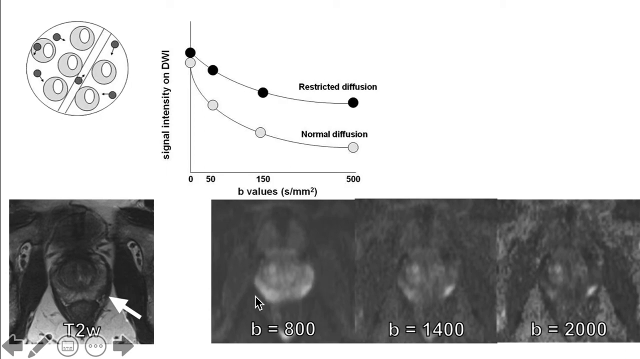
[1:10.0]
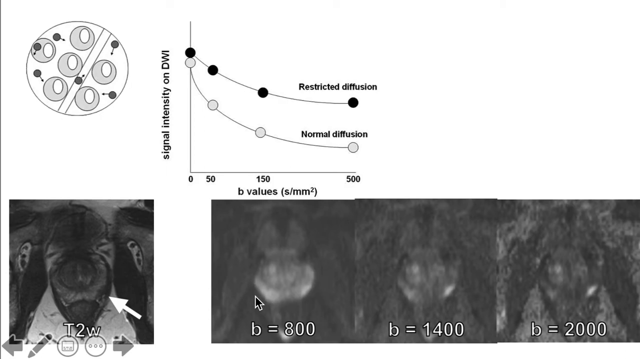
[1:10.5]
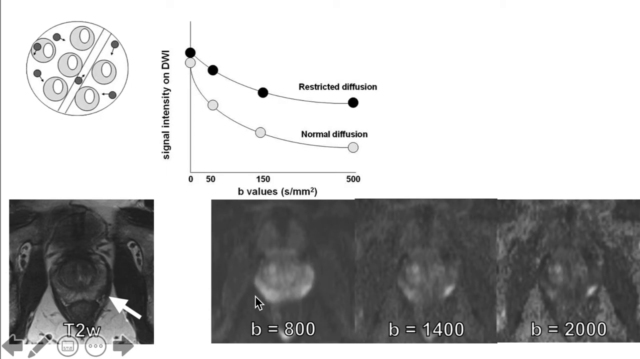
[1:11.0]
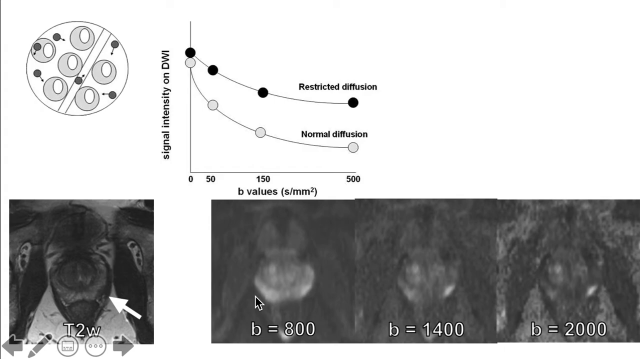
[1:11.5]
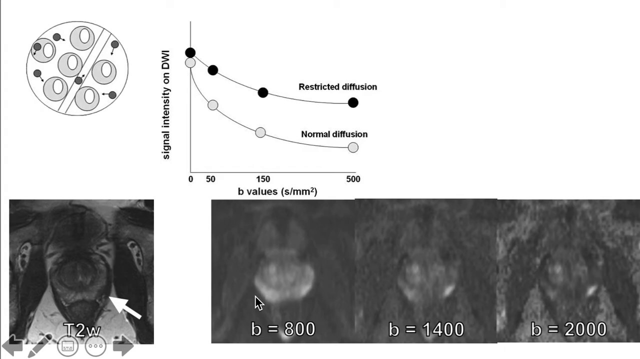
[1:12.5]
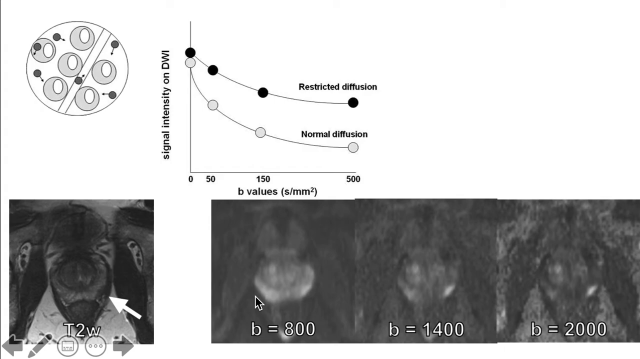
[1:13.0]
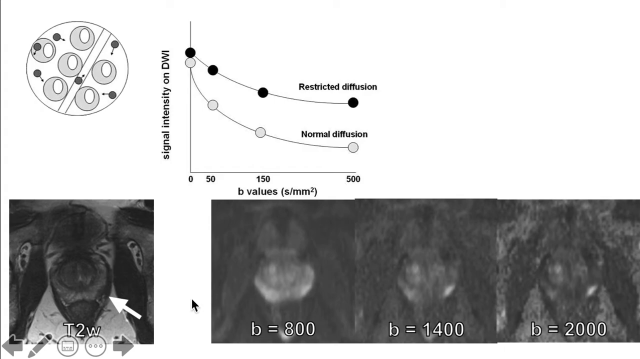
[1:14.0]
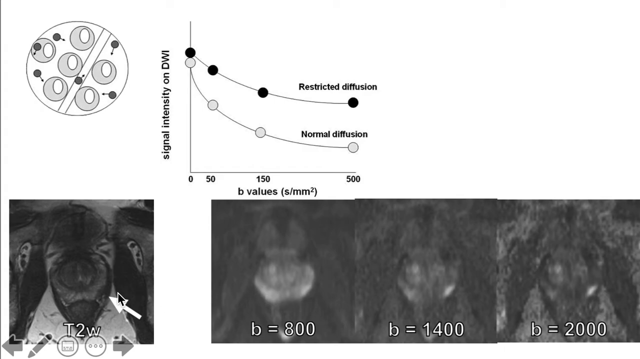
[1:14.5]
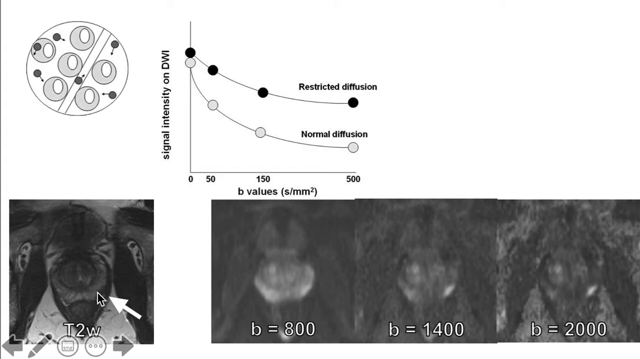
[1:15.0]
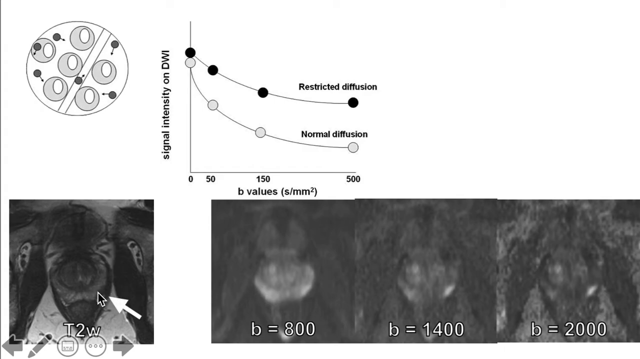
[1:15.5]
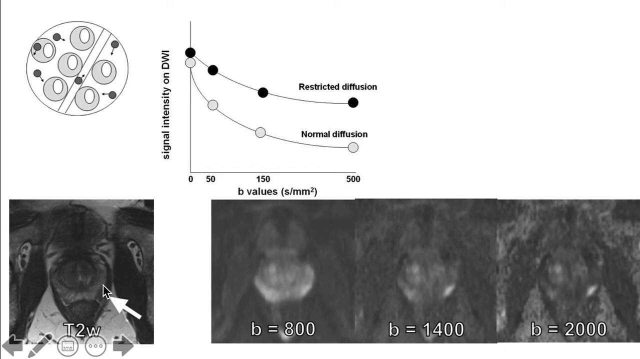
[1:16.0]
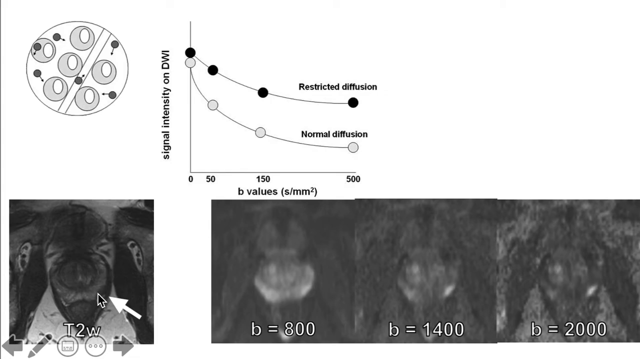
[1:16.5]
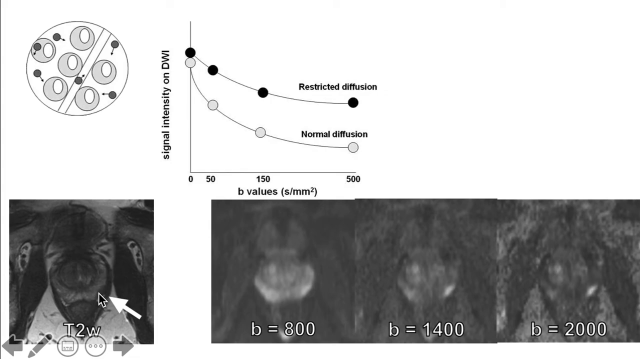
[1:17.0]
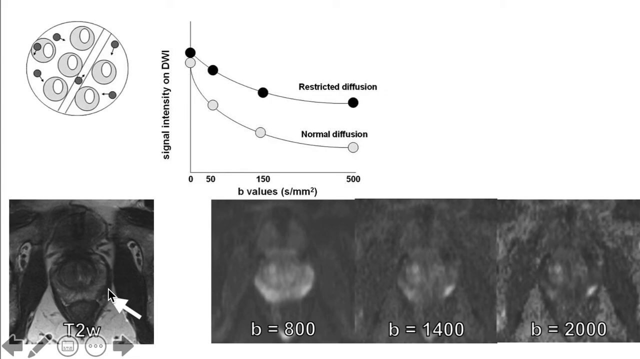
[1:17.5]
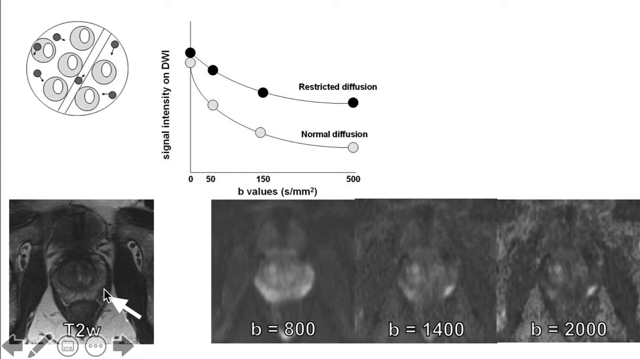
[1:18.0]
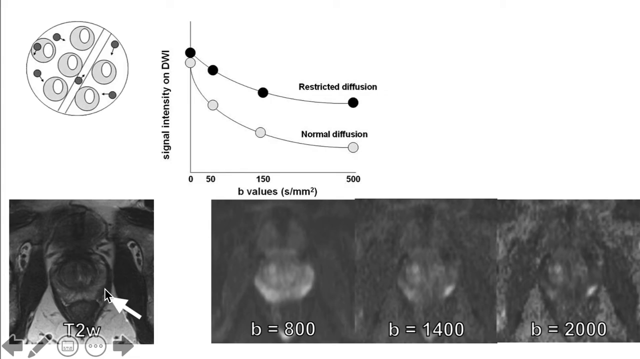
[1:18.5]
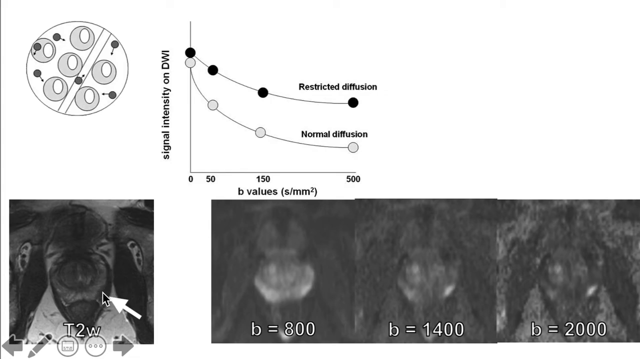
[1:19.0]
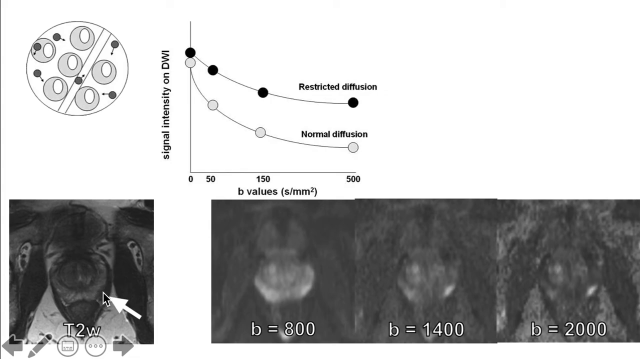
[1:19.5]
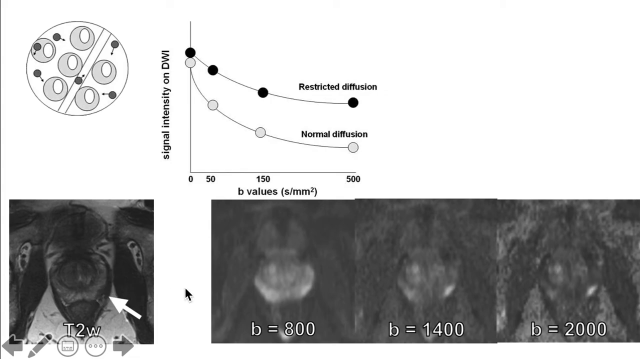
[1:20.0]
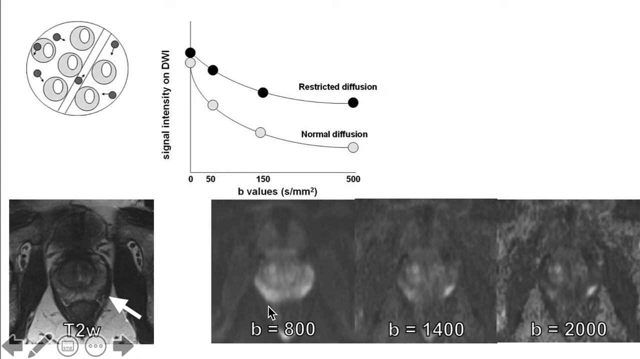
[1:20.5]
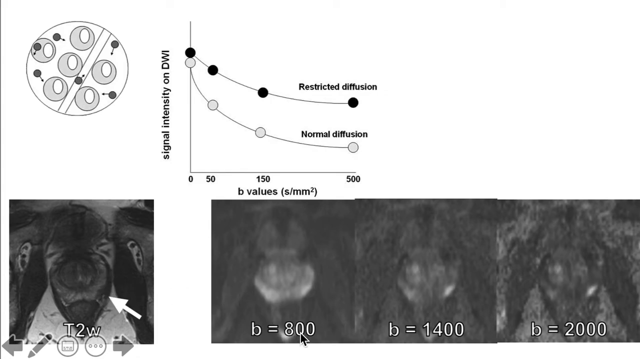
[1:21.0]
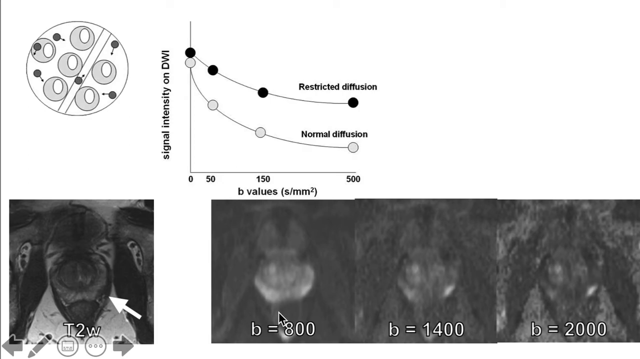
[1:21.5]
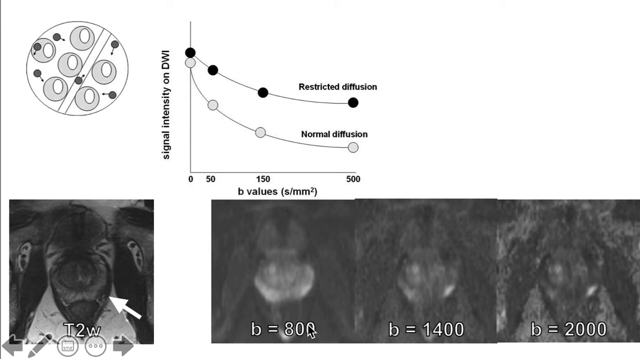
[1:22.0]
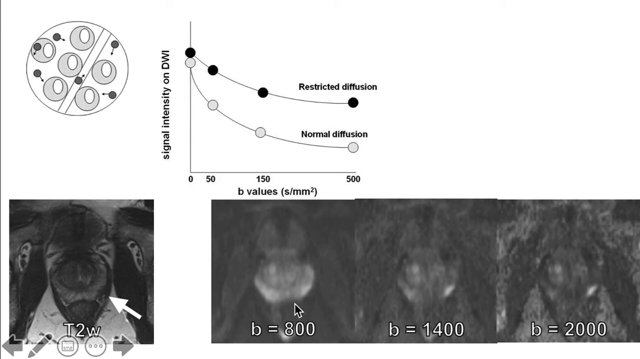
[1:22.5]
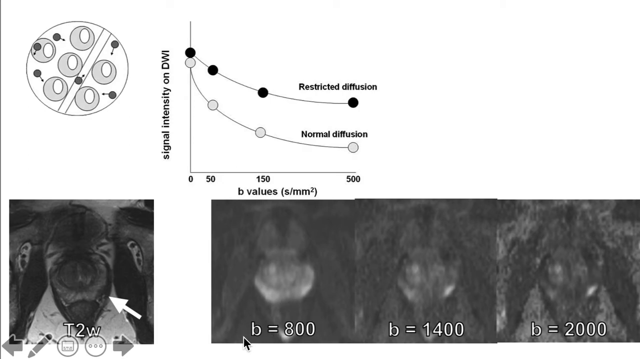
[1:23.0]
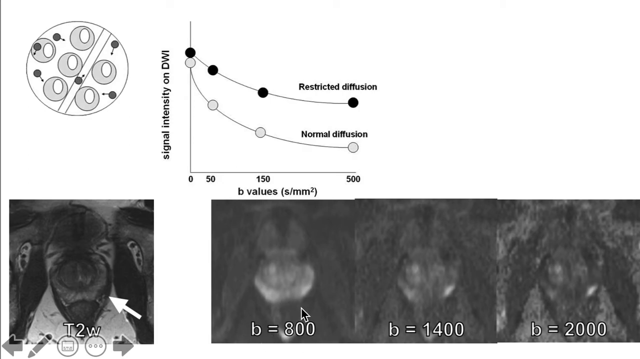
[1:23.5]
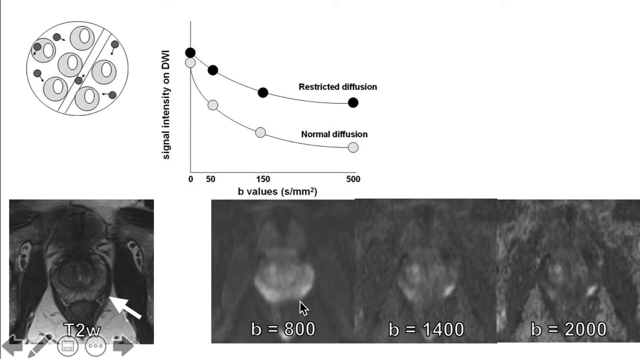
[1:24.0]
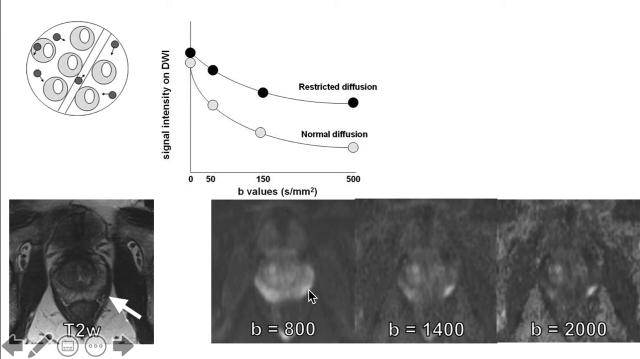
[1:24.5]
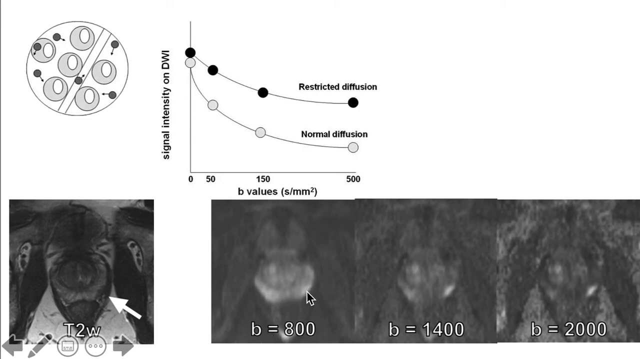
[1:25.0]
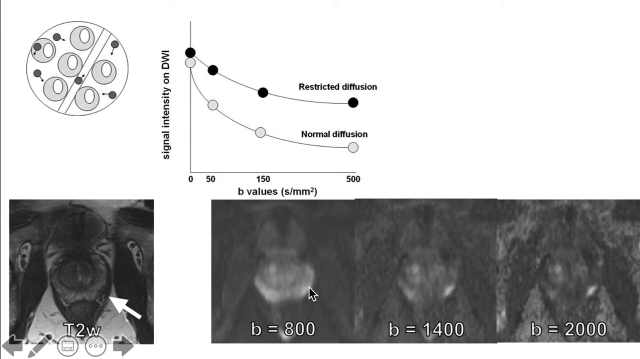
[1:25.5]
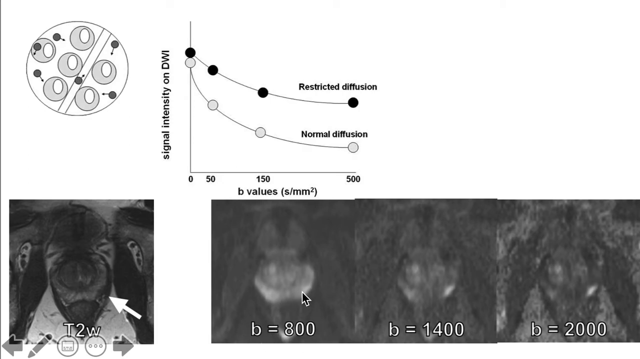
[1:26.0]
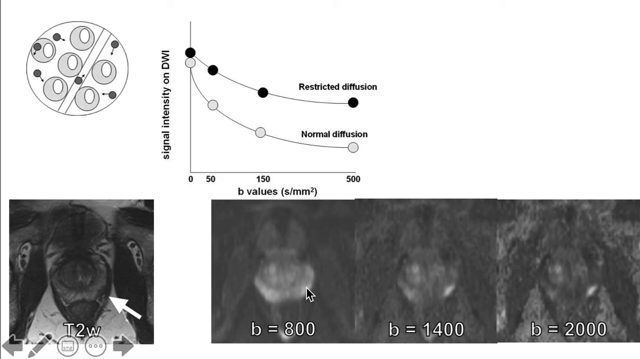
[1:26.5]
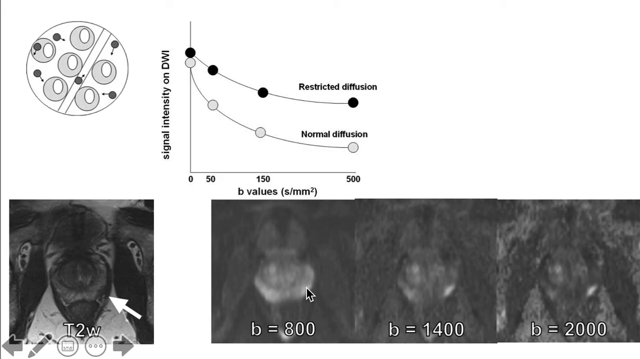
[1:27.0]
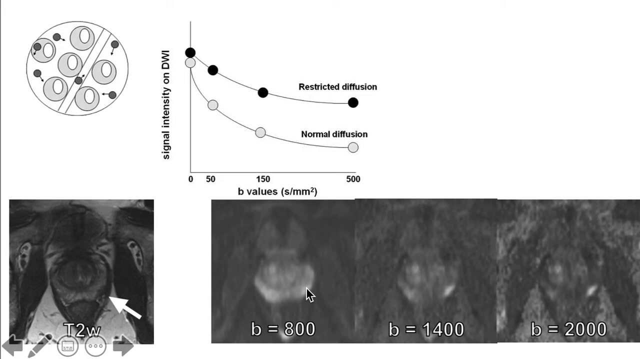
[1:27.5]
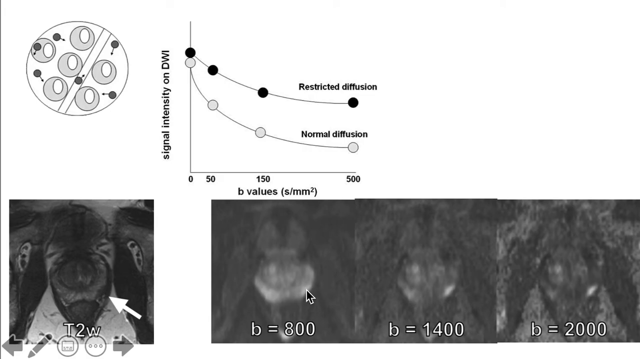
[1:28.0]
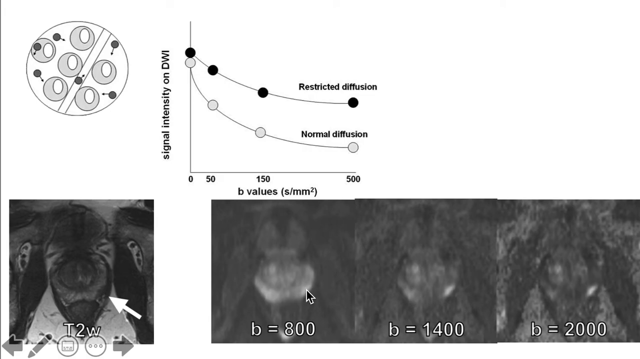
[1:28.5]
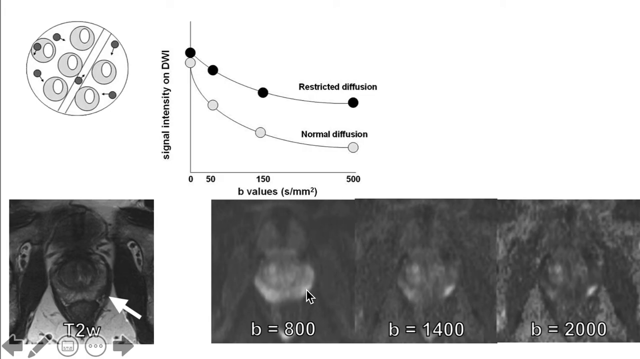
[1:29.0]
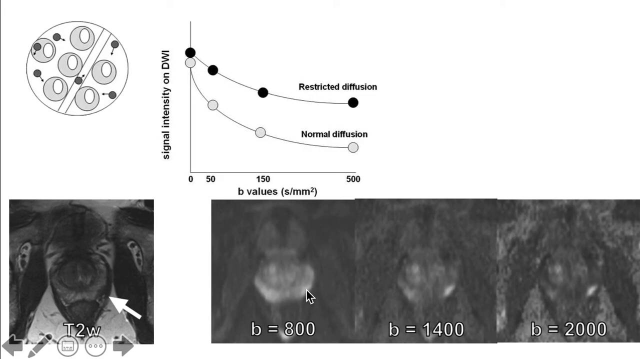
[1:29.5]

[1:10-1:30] A white background has several gray parts, and it appears to be a recording of a computer screen, with a mouse or cursor moving around, gesturing at and showing different things. Three black and white images look like some sort of medical diagnostic images, labeled "B equals 800," "B equals 1400" and "B equals 2000." Another image in the bottom left-hand corner is labeled "T2W," with a white arrow pointing at a certain area of the scan. In the upper left-hand corner is a circle containing several small light gray circles and some very small black circles, or dots.